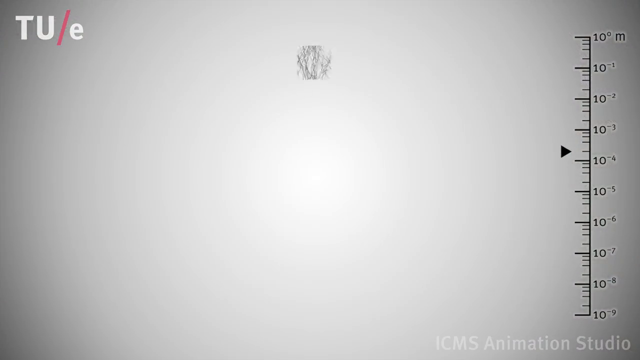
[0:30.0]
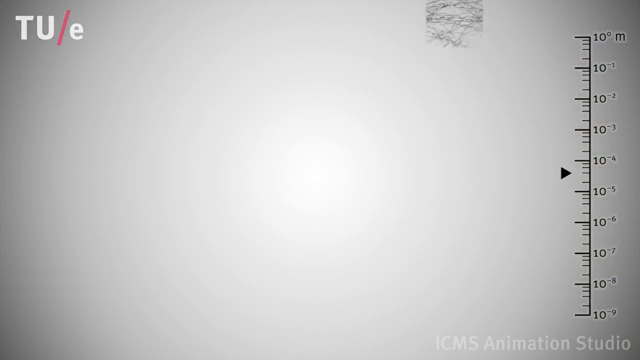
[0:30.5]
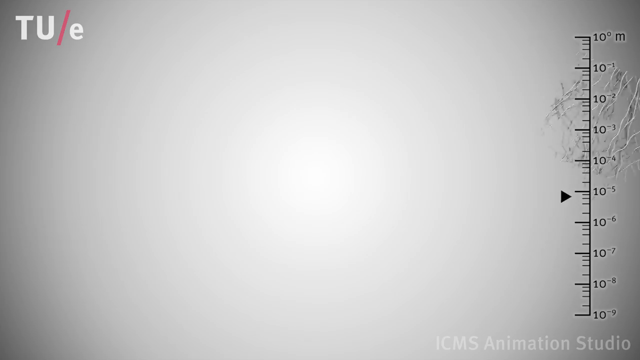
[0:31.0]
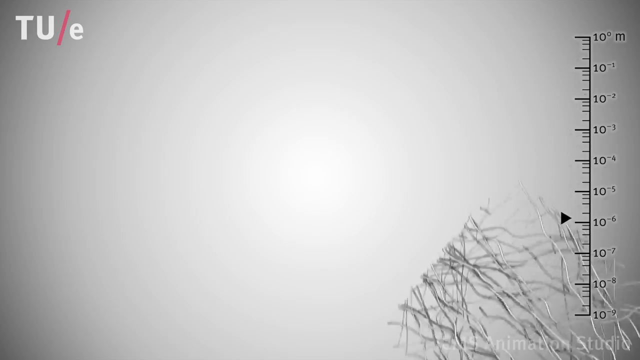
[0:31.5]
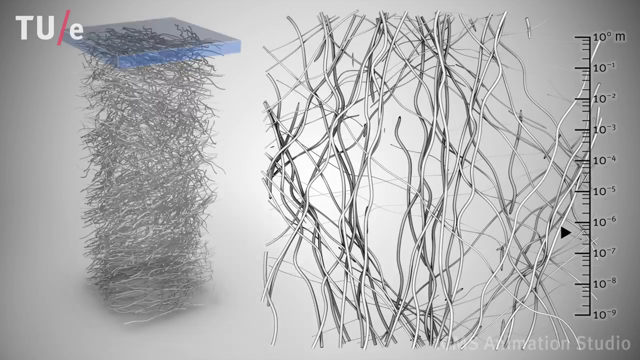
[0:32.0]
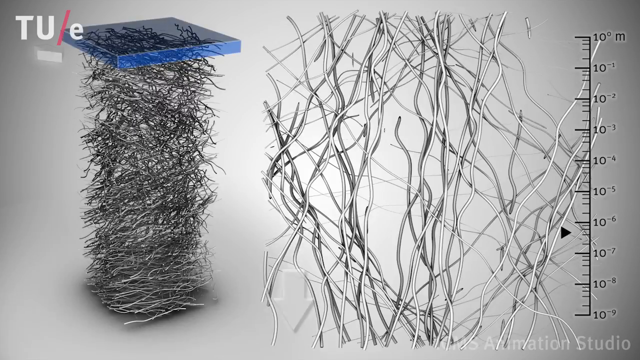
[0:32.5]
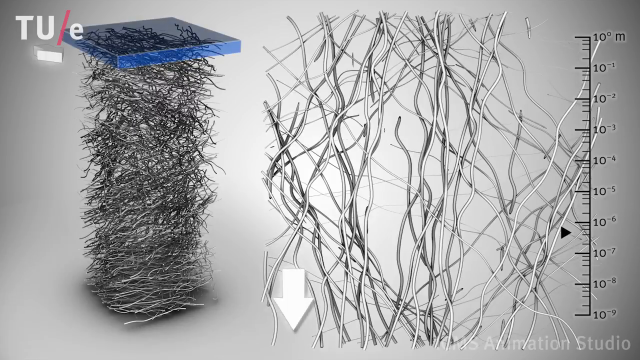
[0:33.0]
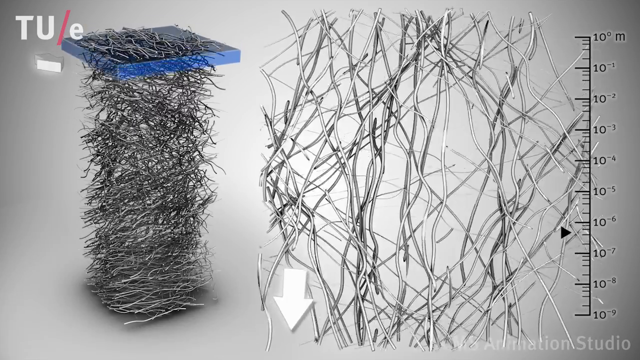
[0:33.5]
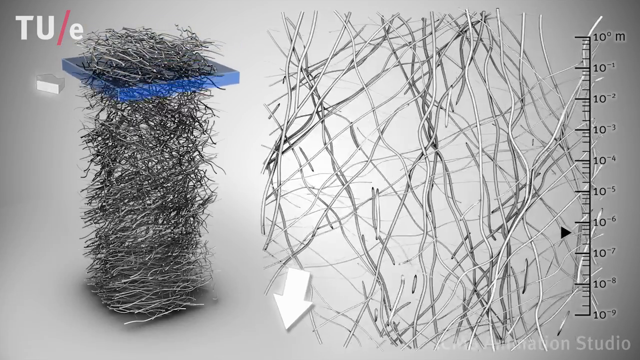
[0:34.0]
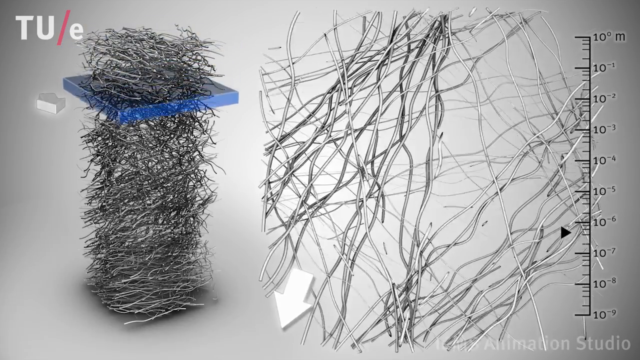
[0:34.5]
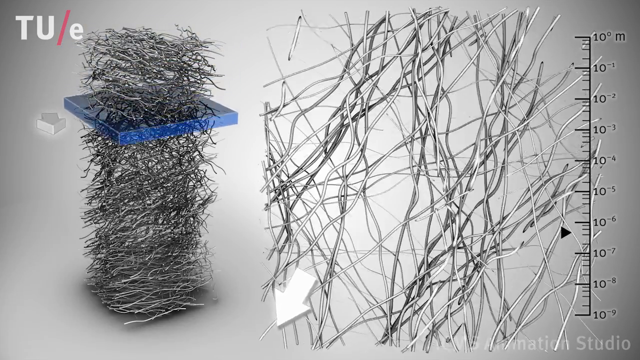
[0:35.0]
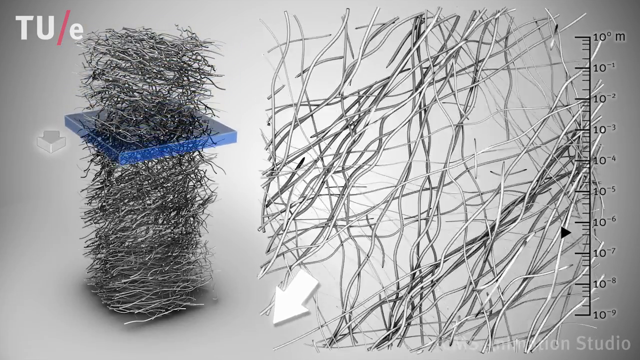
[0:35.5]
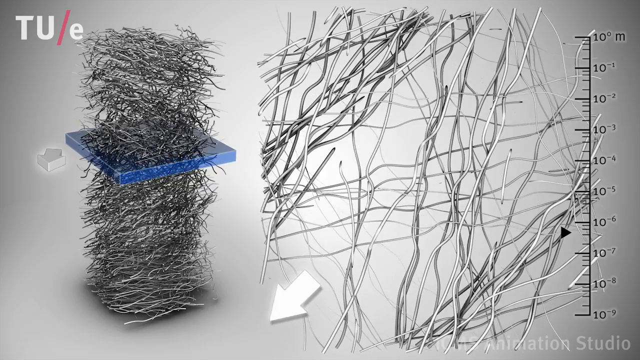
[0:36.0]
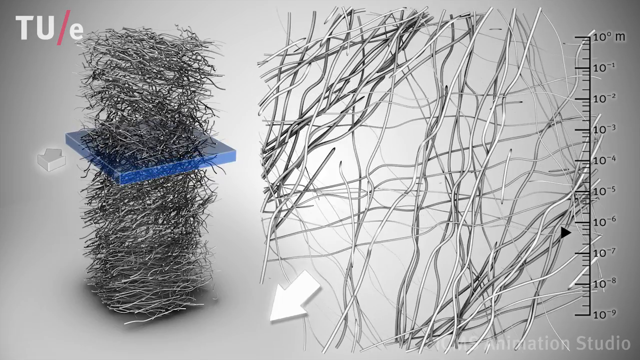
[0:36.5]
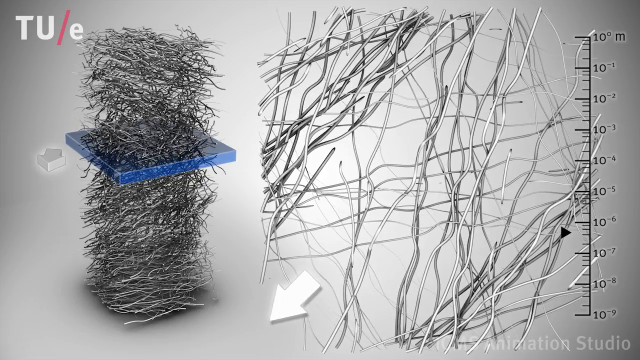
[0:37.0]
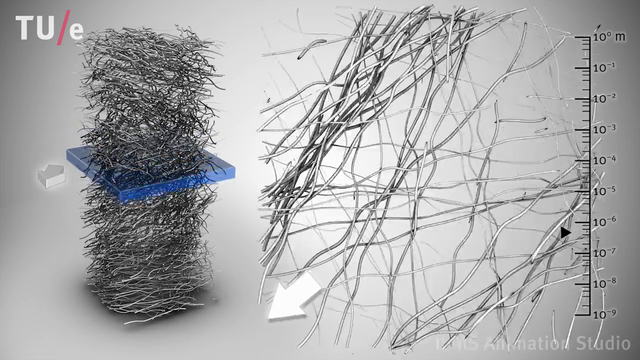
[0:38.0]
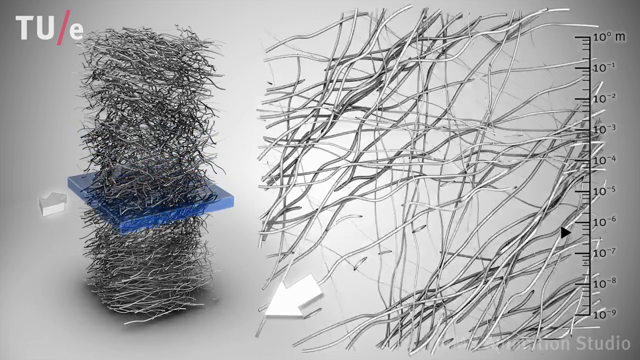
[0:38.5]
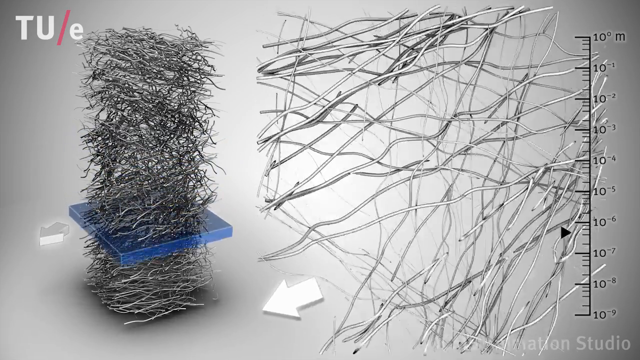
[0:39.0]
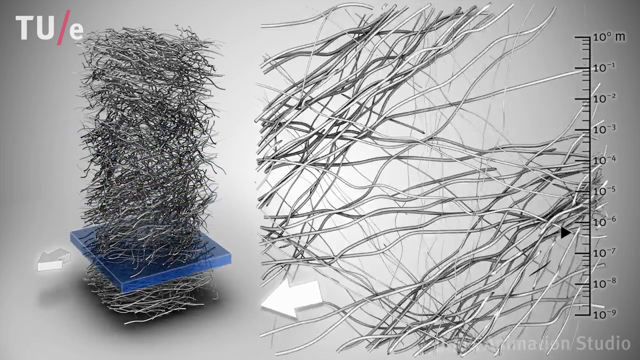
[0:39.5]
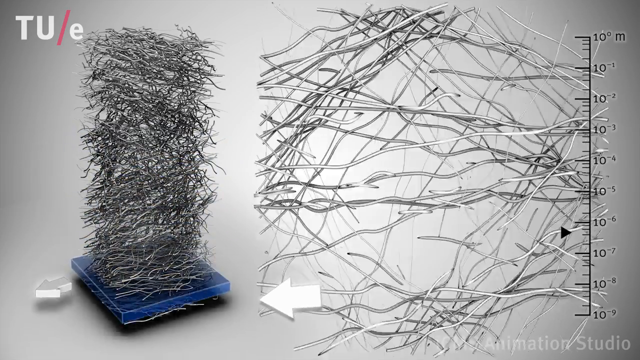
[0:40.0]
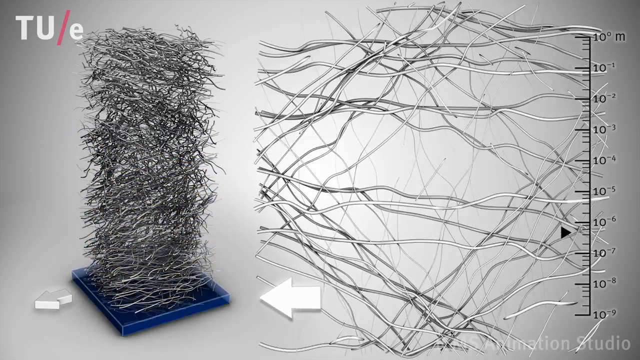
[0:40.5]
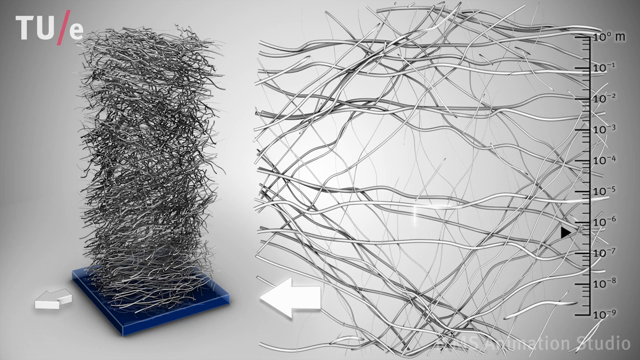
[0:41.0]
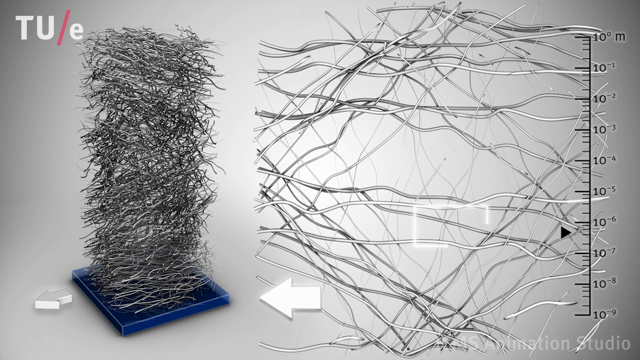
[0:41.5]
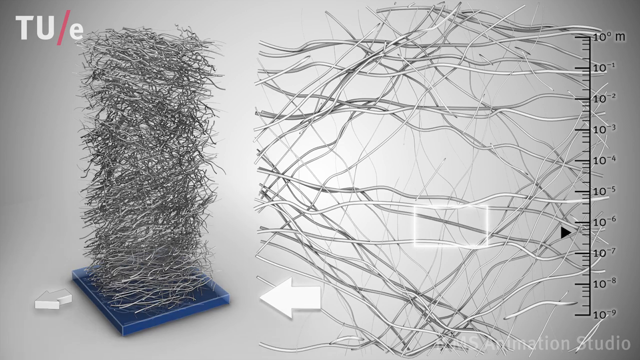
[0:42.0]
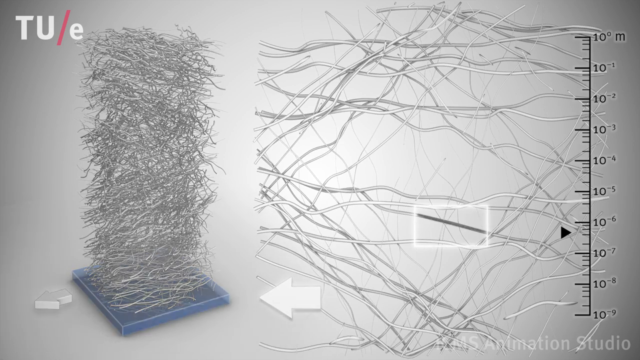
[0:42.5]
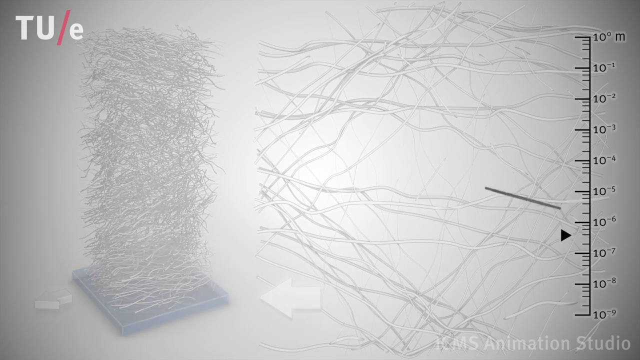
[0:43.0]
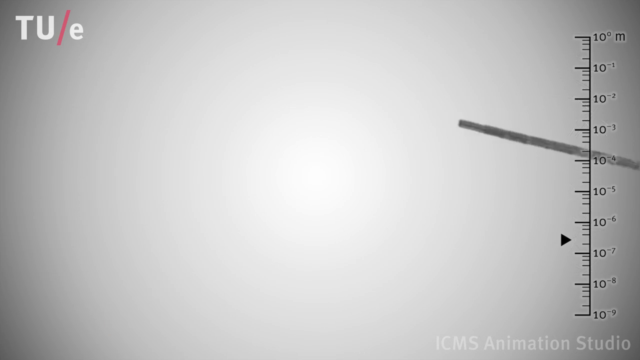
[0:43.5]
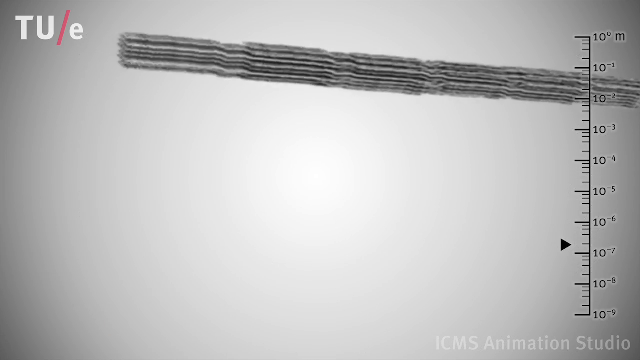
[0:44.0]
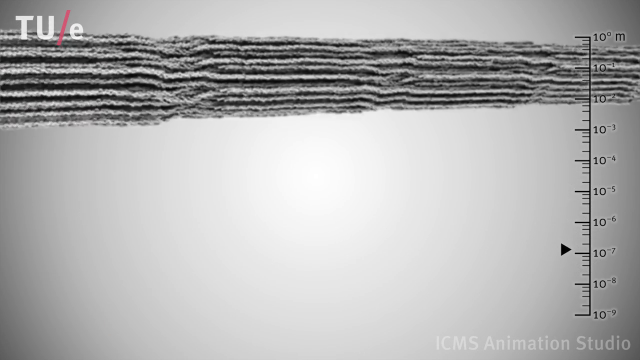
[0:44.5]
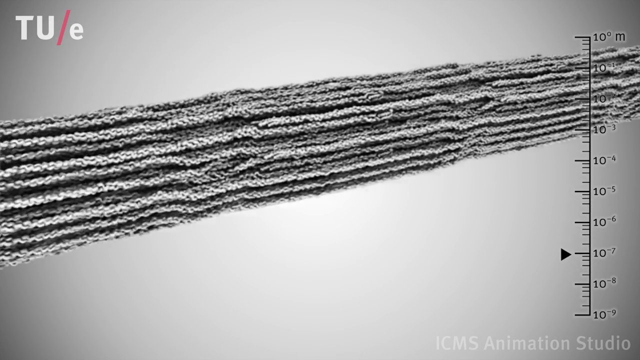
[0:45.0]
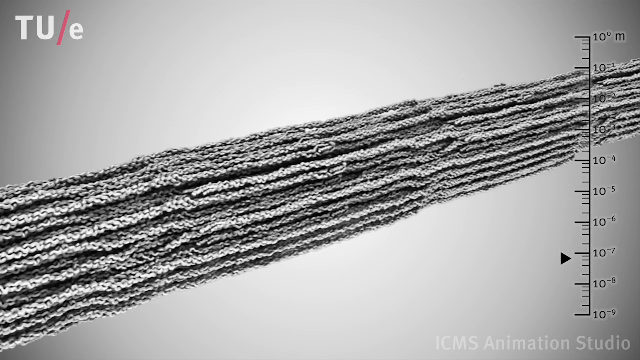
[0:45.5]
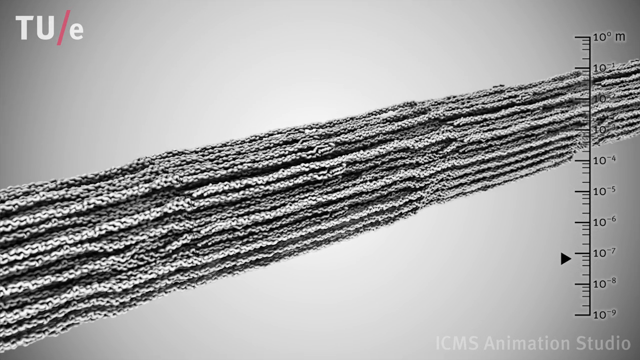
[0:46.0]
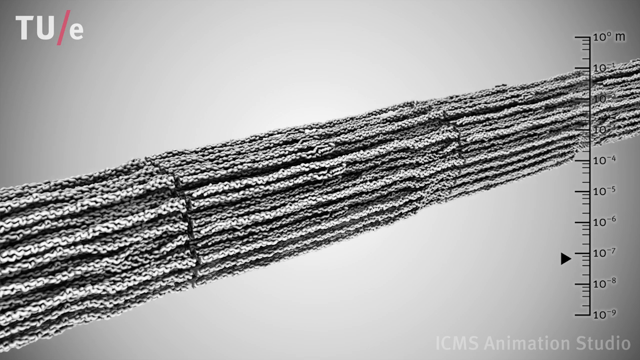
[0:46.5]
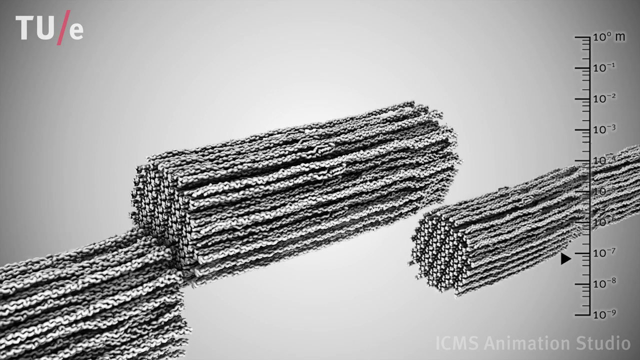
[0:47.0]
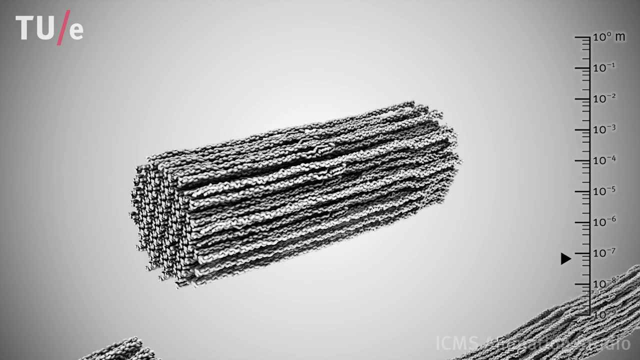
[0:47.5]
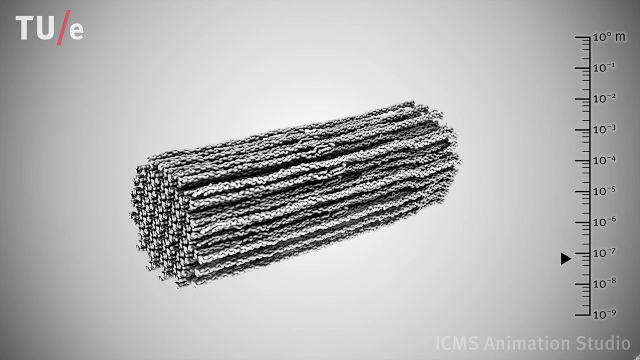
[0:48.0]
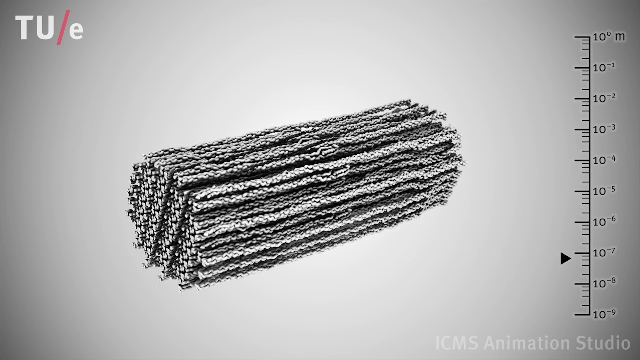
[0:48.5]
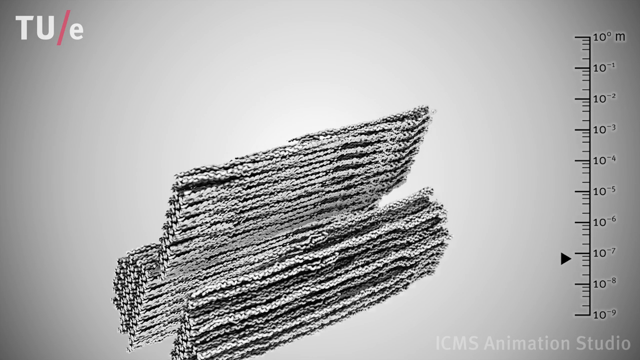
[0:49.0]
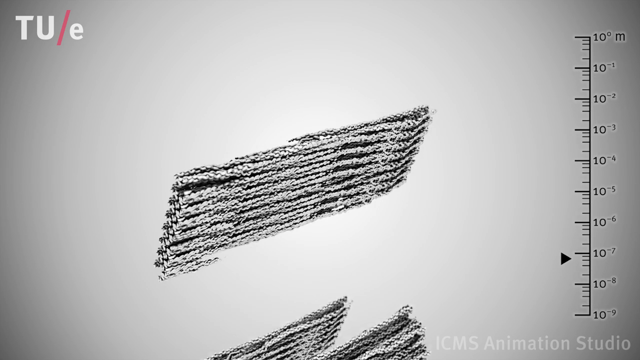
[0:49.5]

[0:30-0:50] The scene has a white and gray background. On the right side is a scale running from top to bottom, from 10 to the zero power down to 10 to the minus nine power, labeled "meter". White text at the top left reads "TU/E". What looks like a black blob circles around clockwise and zooms in repeatedly, then zooms into the middle, where there are many strands that look almost like hair. On the right and left sides is a zoomed-out diagram of them: a column of what look like strands of hair. A blue rectangle moves downward along this column, and the strands on the right side appear to thin out as they go through transitions. A white rectangle is then placed over one of the strands on the right side, and the view zooms in on it, moving up and to the middle, showing the strand from the bottom left to the top right. It looks like it is made up of many little thin tubes, like little strings bunched together. It then appears to be cut around, dissected and split in half, and the view zooms into its middle. On the scale at the right, a black arrow points to 10 to the minus four.